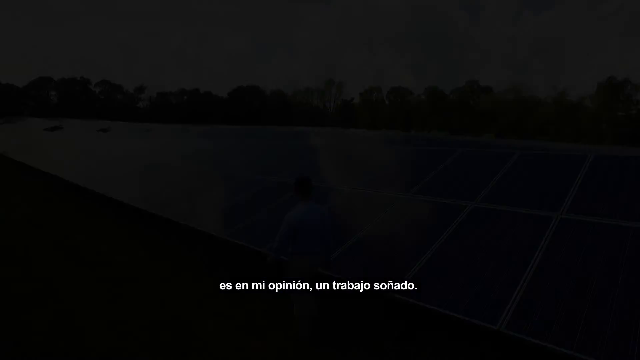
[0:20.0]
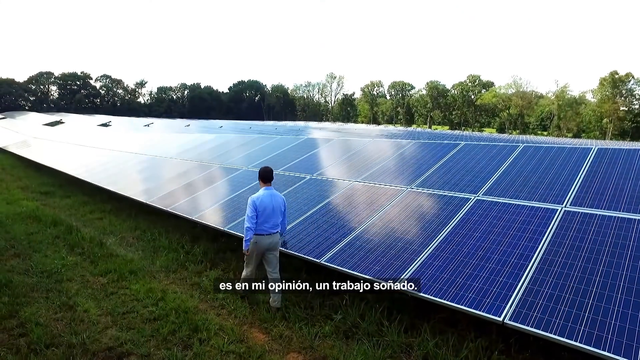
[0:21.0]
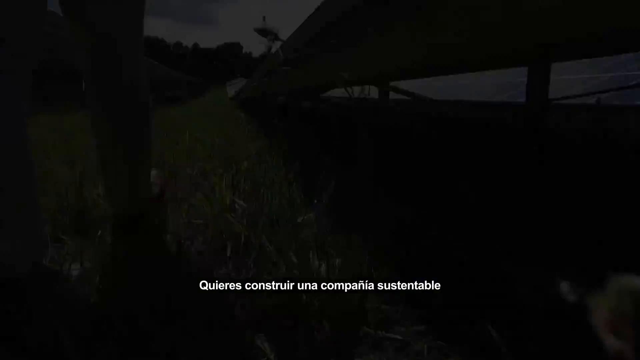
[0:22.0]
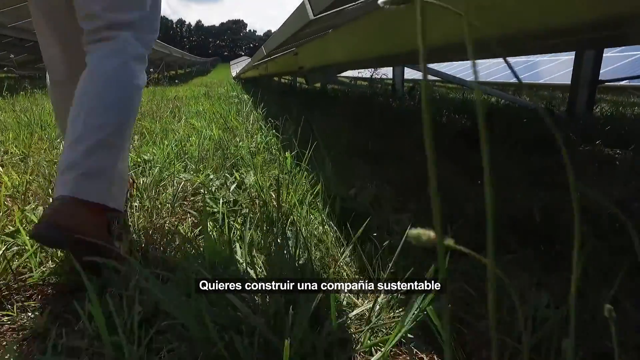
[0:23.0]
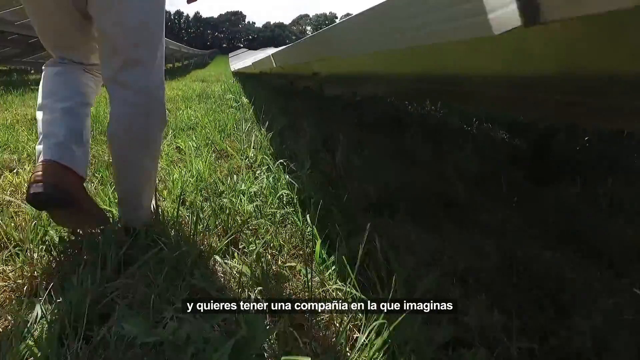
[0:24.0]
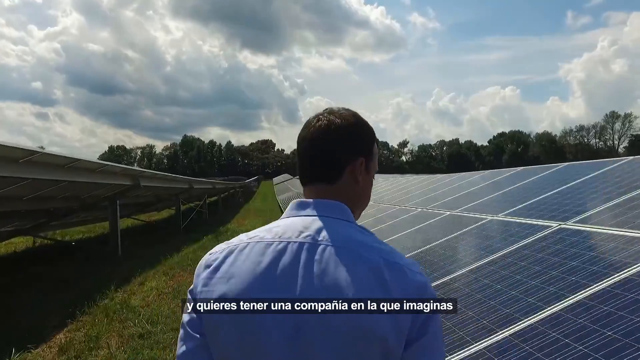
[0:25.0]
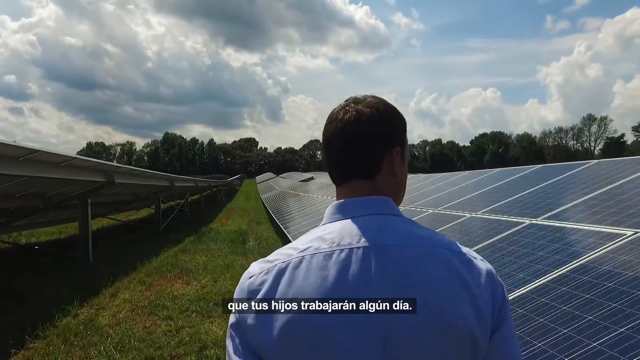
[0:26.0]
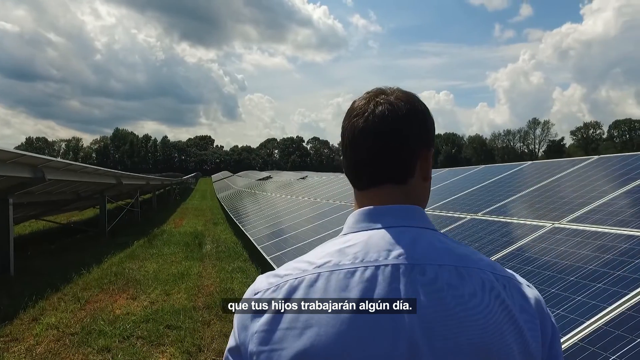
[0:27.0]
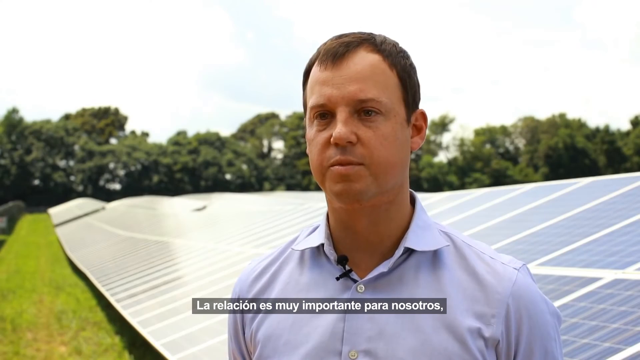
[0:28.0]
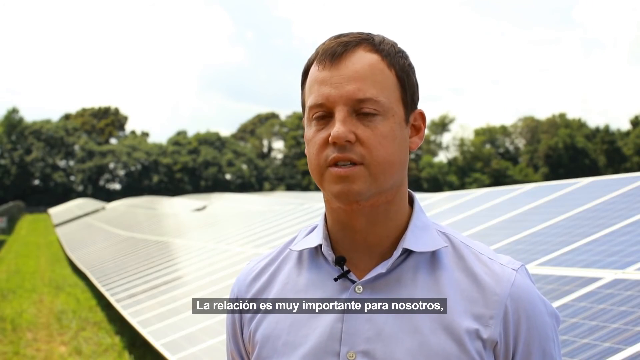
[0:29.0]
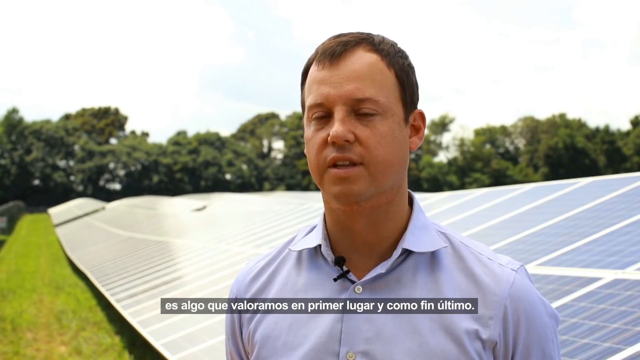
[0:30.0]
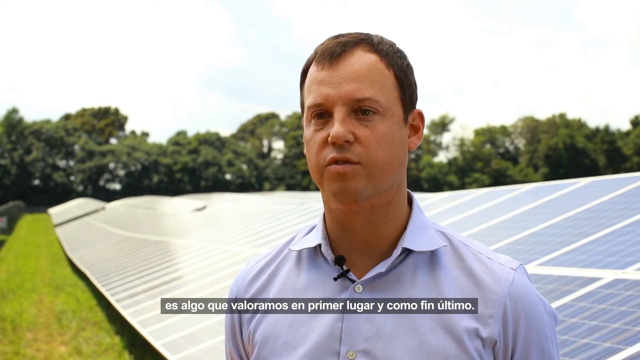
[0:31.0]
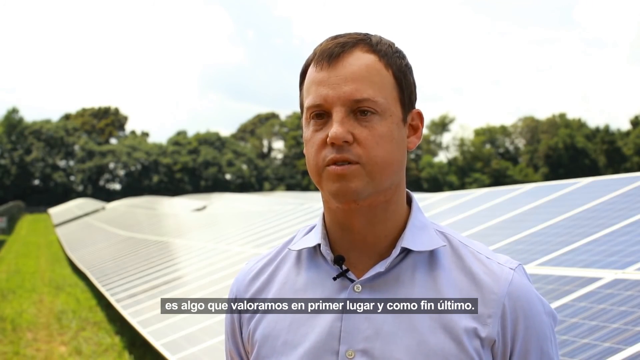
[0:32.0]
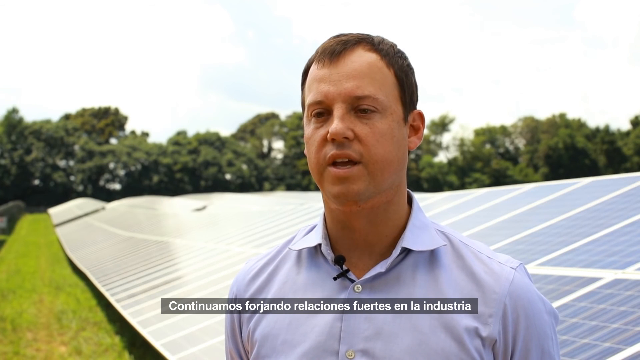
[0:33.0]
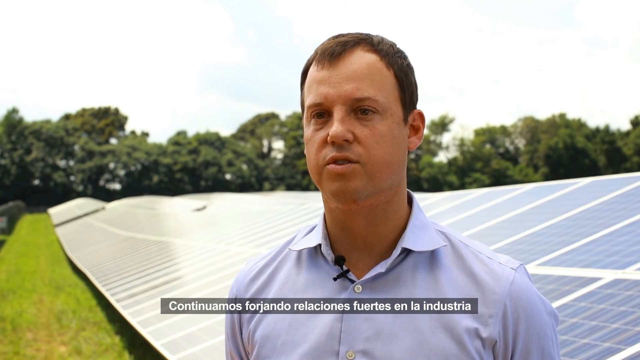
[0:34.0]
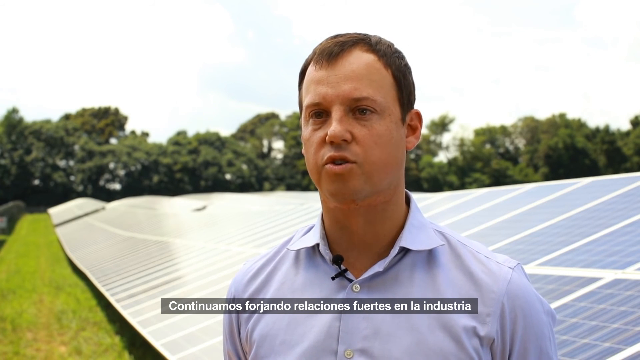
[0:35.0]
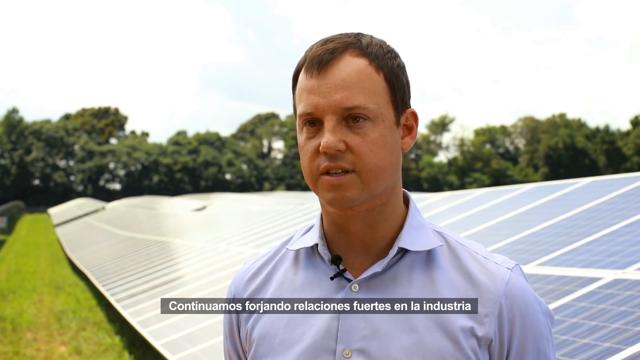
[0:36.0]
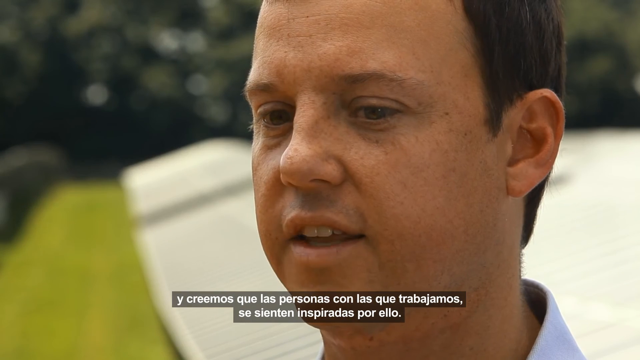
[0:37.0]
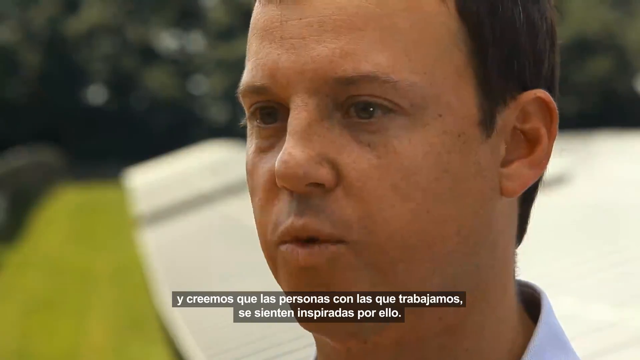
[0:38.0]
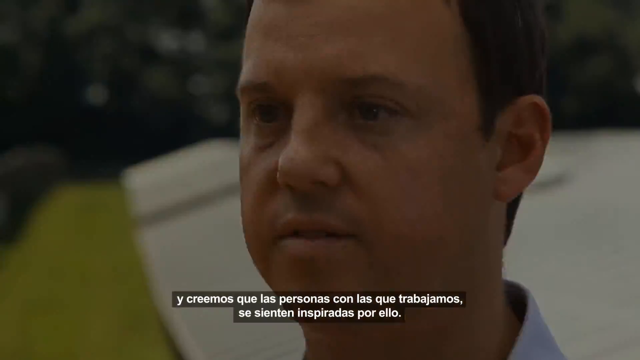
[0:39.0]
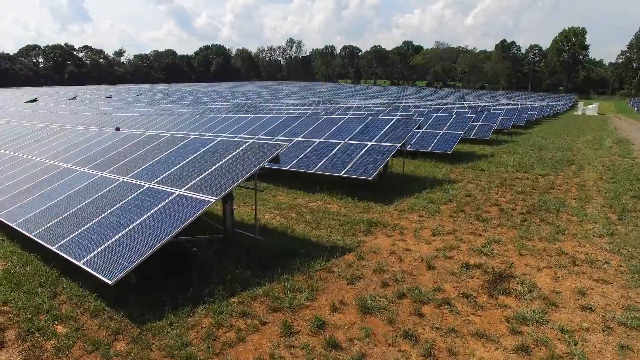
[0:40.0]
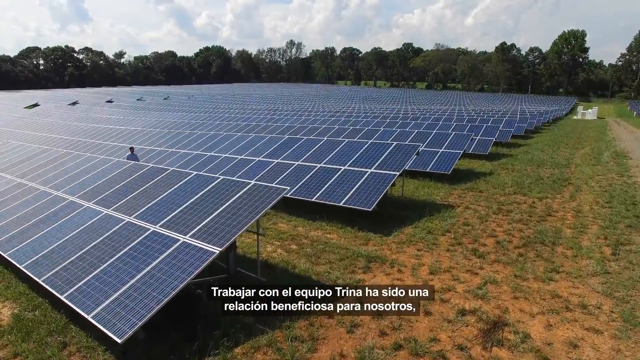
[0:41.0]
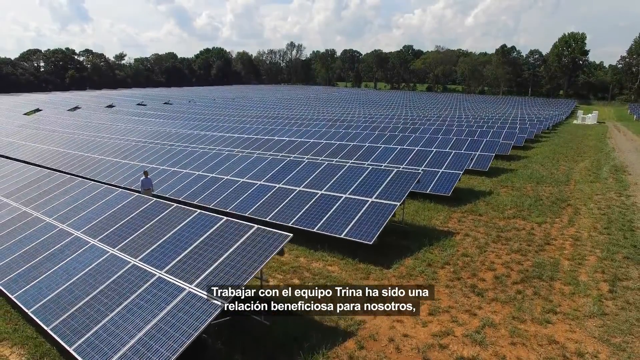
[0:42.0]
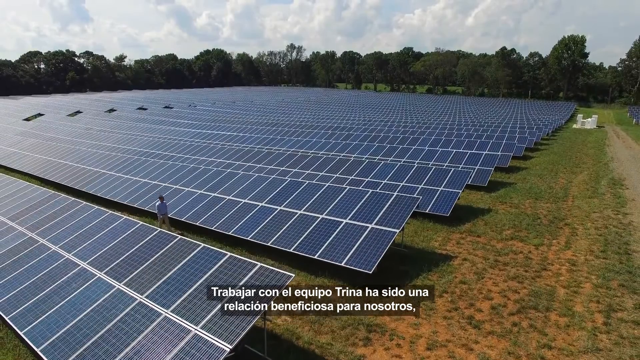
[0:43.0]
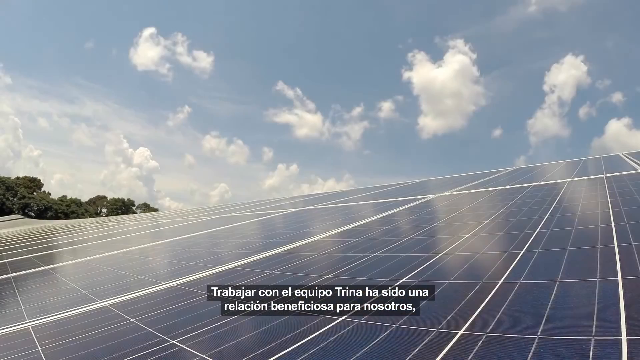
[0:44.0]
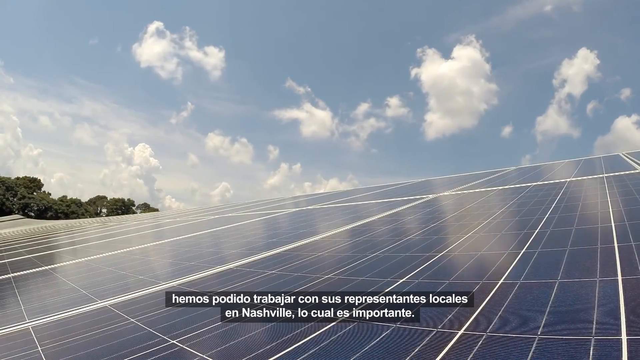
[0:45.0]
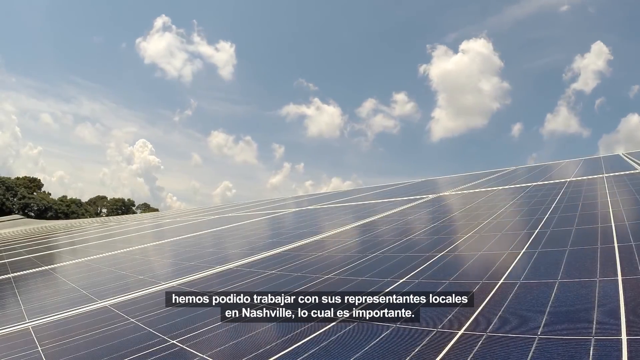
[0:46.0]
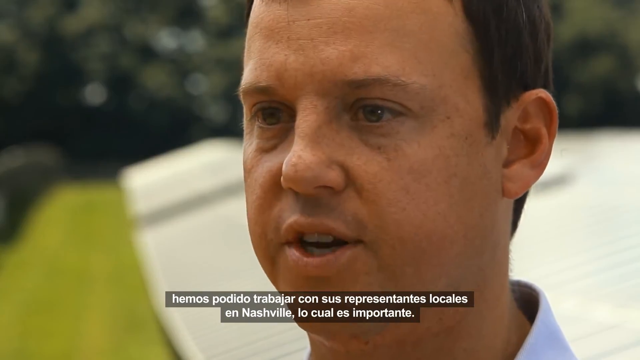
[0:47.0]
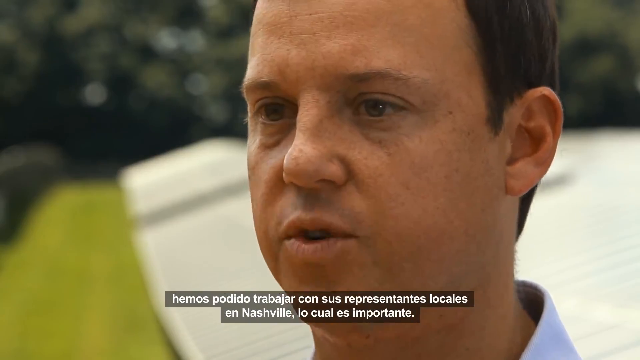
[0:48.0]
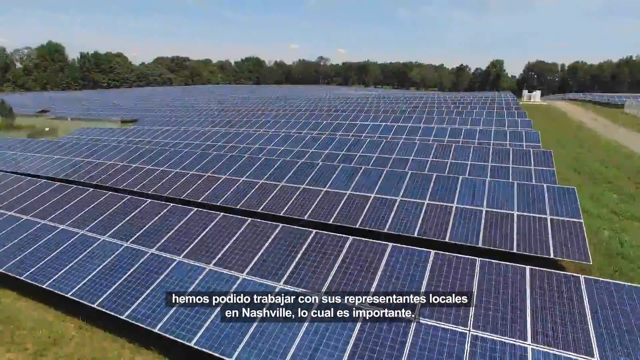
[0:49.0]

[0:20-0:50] The black screen opens up to a shot of someone walking past long, winding solar panels that reach far across a large, vast field. The person wears a blue tracksuit and khaki pants. There are clouds in the sky and green trees surrounding the field. The video cuts to the person who was walking by the solar panels as he speaks to the screen. He has short brown hair, a mic on his dress shirt, and looks to be Caucasian. Spanish subtitles appear at the bottom of the screen as he speaks. The camera cuts to an even closer shot of his face as he keeps talking and answering questions. The shot then fades out and fades in to a drone shot of the solar panels across the field.